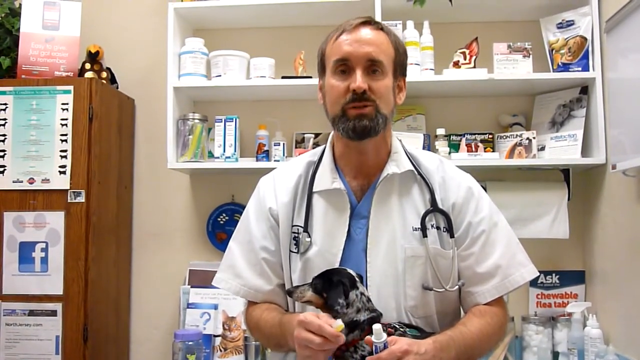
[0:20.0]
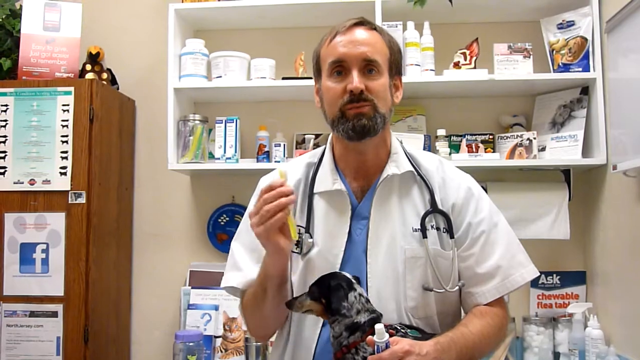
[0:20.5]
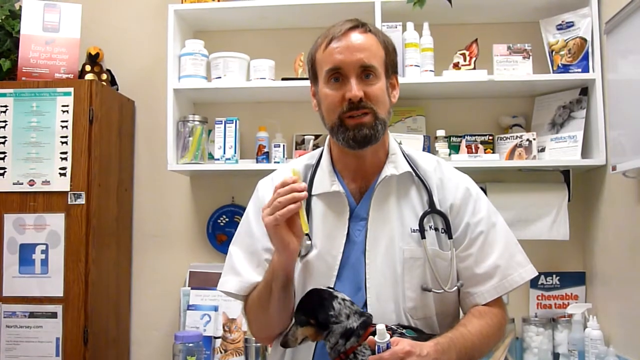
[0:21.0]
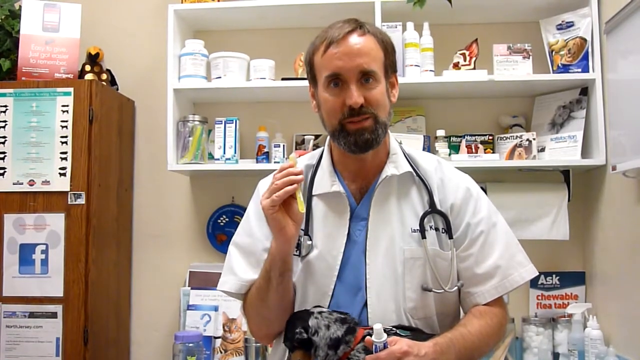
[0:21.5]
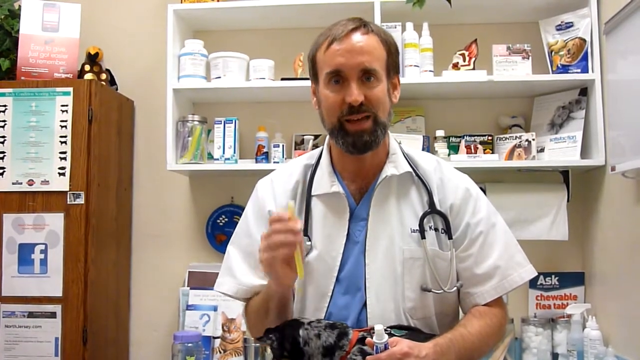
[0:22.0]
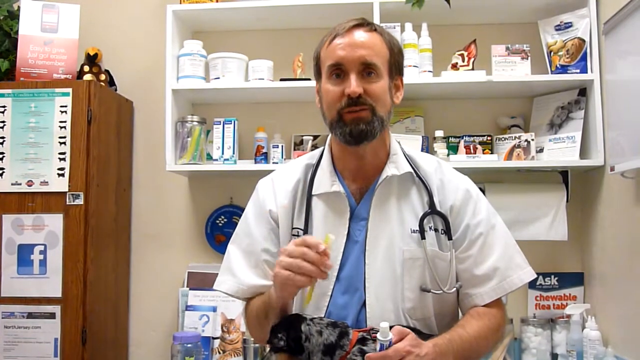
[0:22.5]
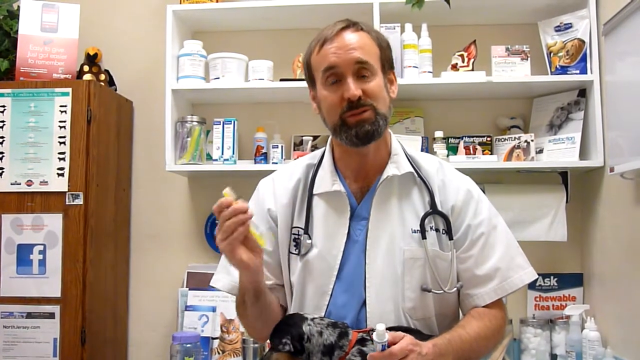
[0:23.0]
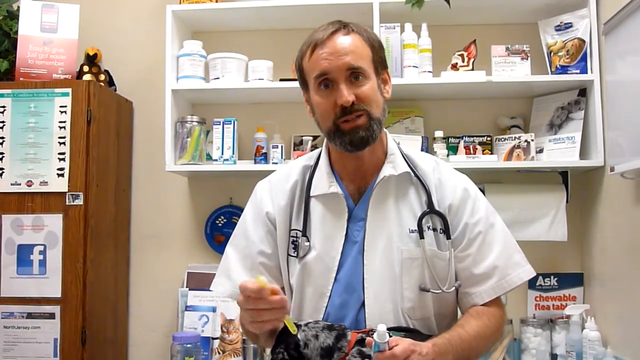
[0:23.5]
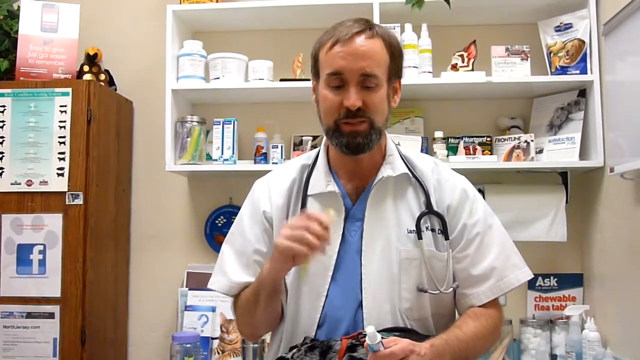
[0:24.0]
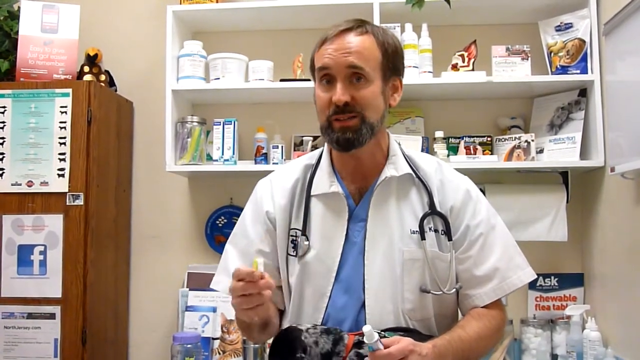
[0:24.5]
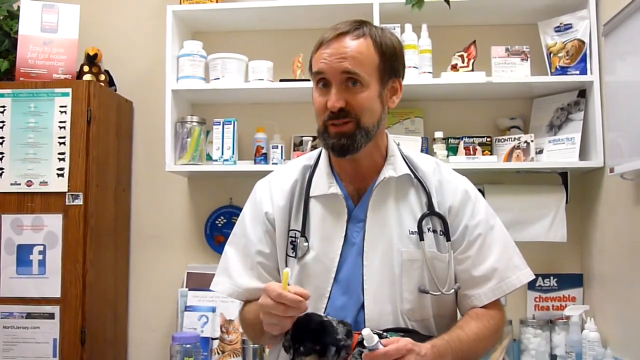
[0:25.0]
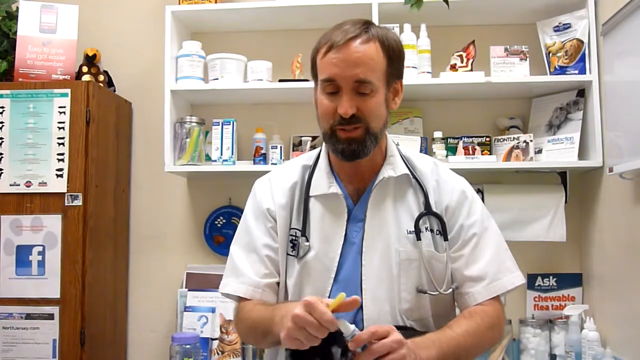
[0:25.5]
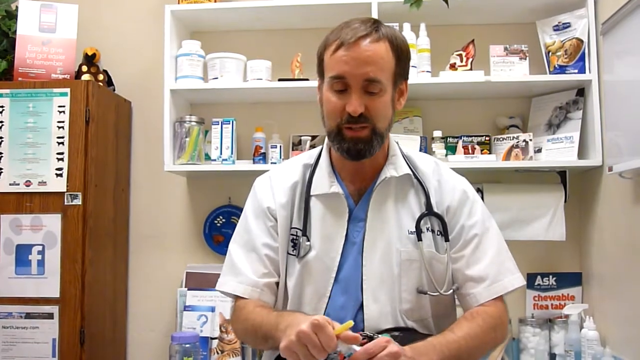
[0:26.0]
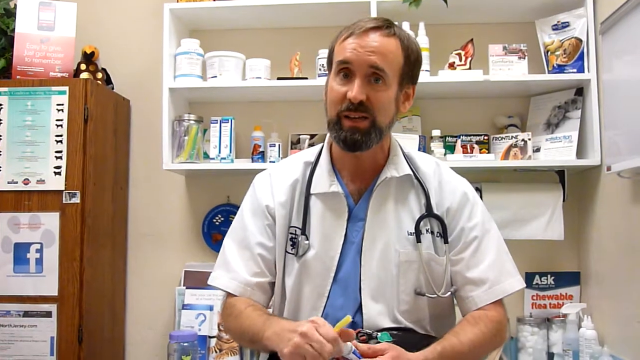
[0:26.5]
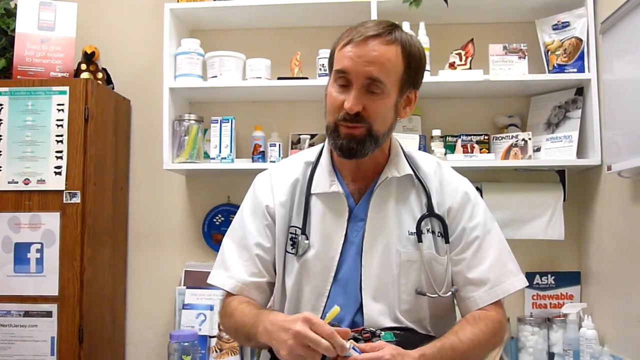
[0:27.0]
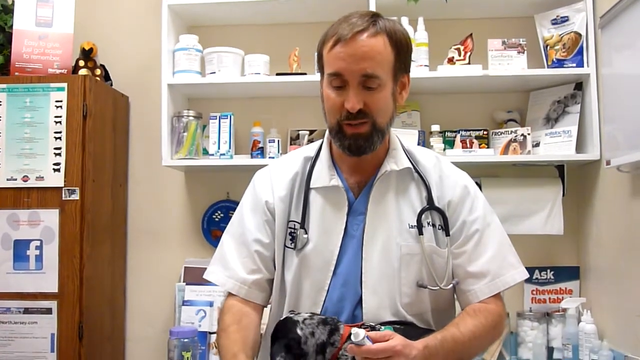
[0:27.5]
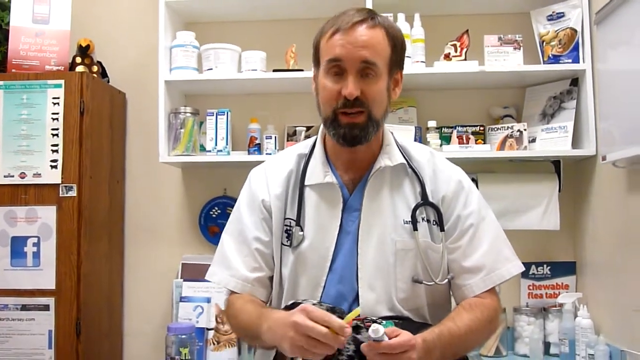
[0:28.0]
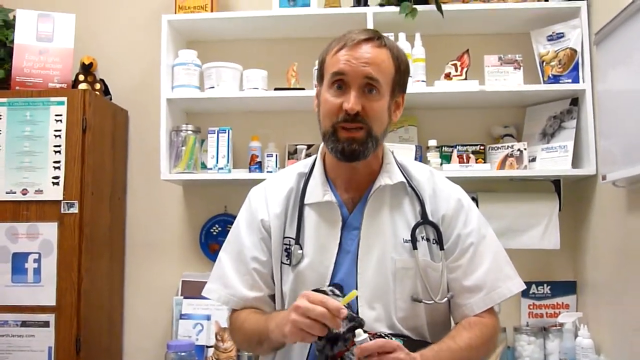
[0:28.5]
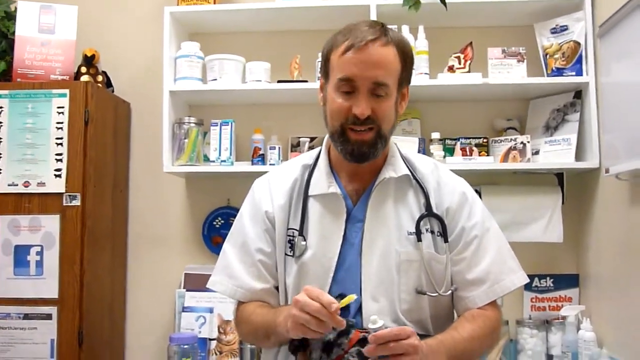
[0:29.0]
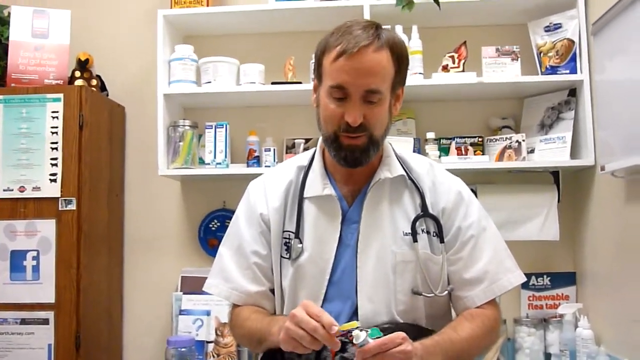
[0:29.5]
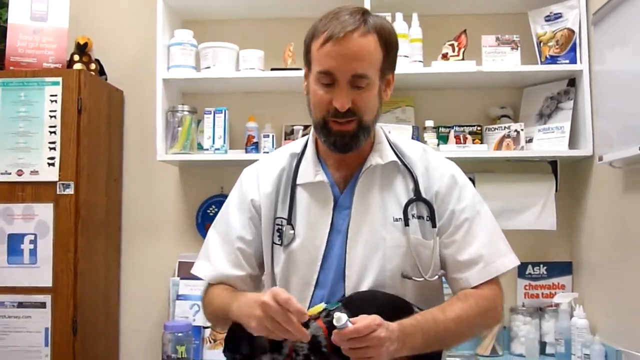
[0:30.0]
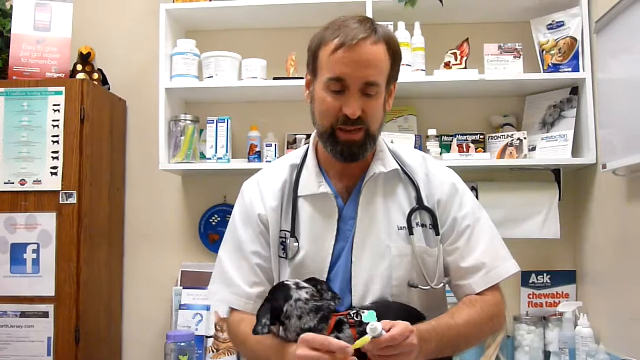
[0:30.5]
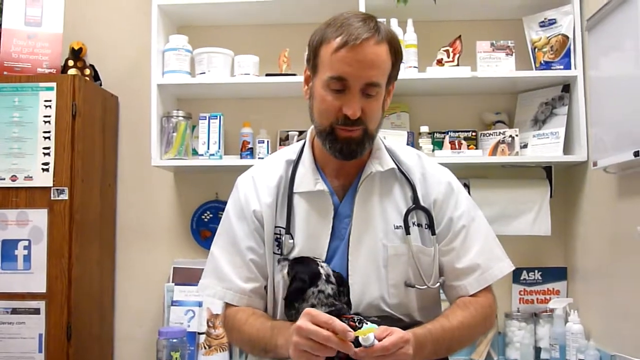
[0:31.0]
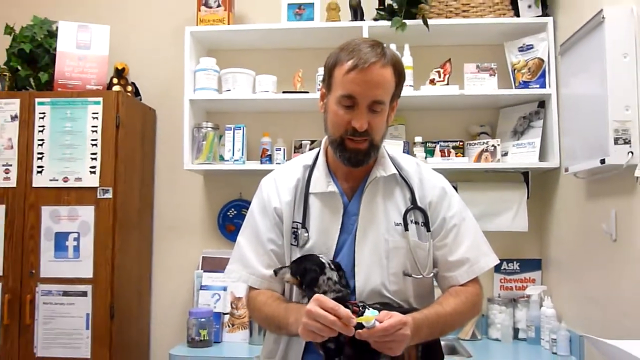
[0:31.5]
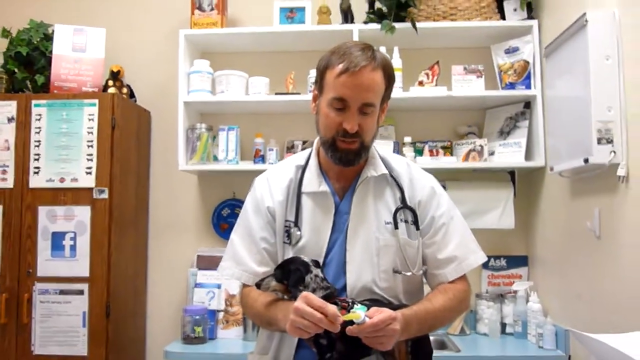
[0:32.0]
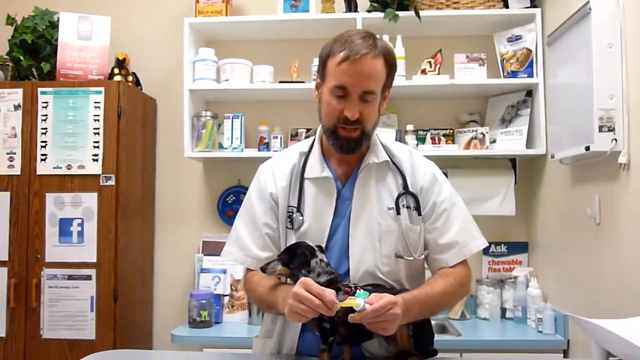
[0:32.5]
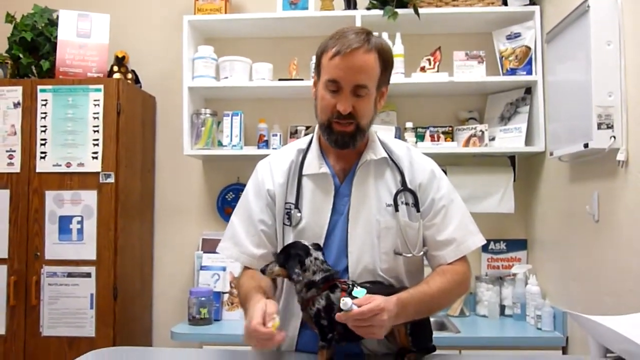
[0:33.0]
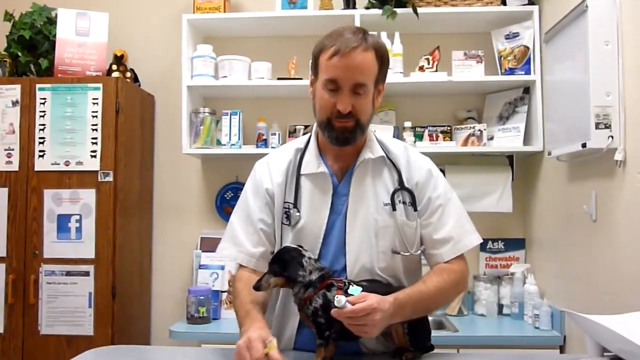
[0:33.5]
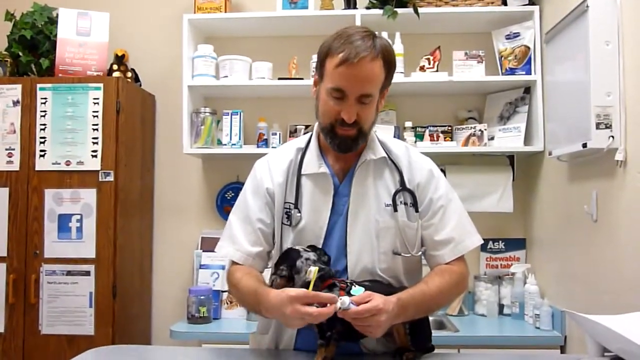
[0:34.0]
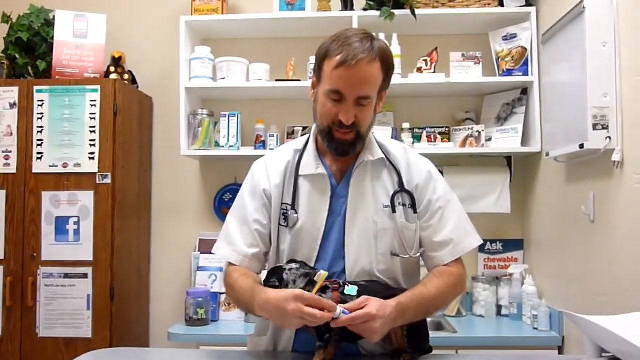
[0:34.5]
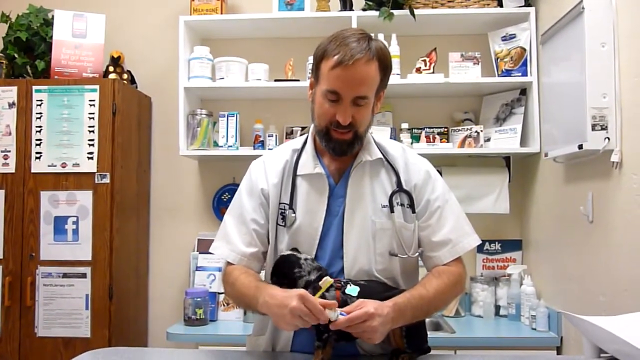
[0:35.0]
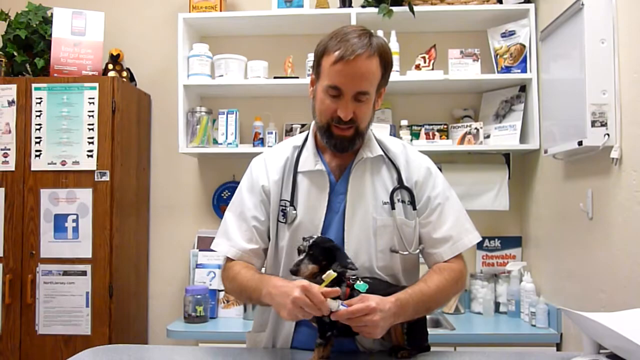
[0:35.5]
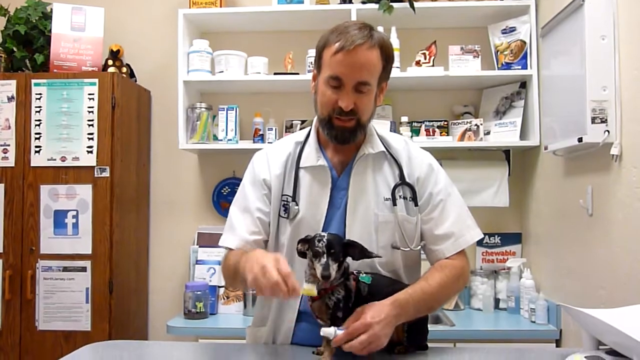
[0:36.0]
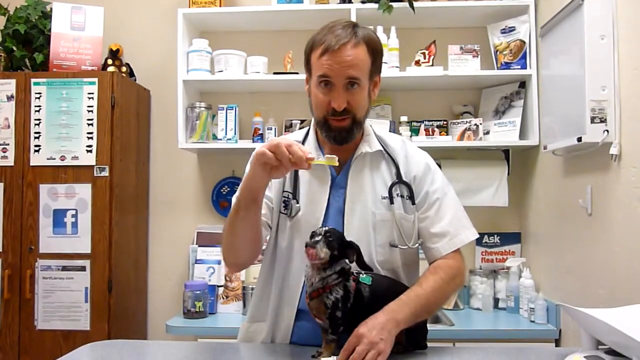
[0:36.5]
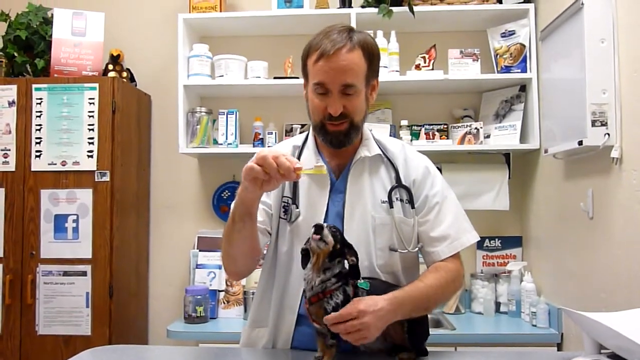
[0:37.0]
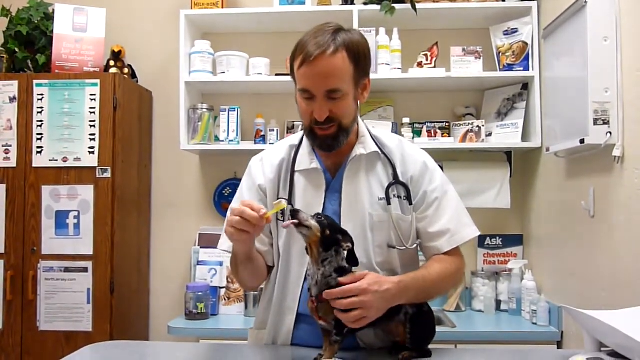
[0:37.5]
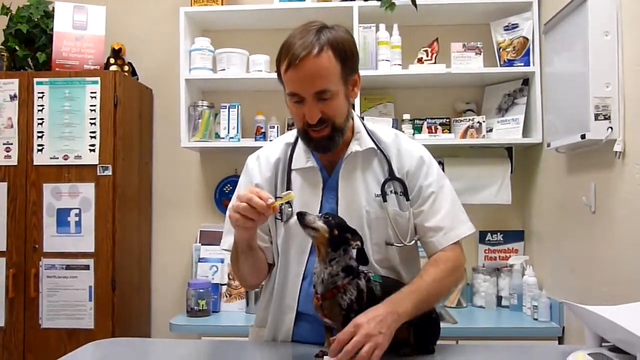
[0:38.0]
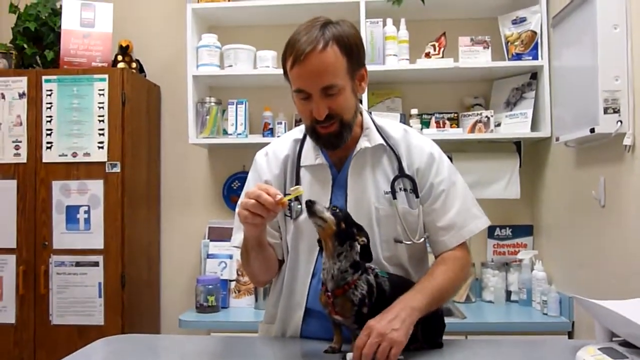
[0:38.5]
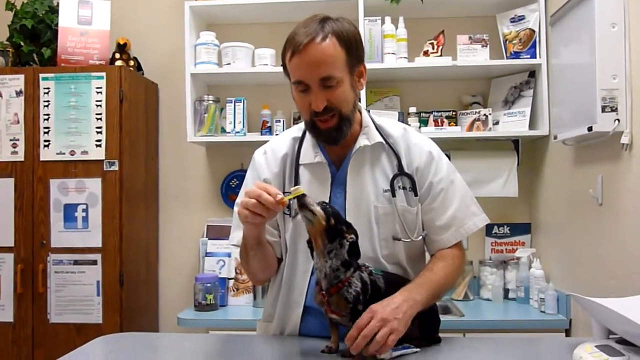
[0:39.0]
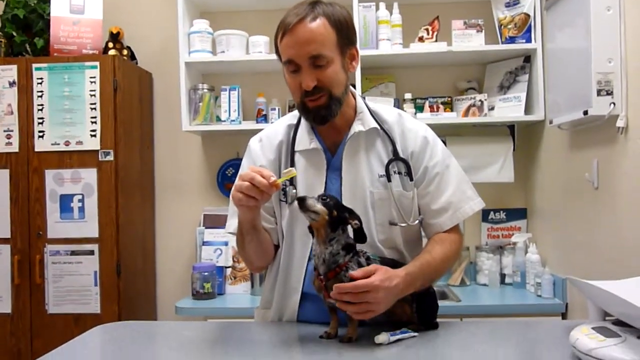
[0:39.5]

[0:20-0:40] The veterinarian places the dog on his veterinary table, holding another product in his right hand. The doctor's entire head and forehead are now in view. On the left side of the scene is a cabinet with a Facebook ad and a poster explaining some veterinary care. Holding the dog tightly, the vet squeezes some paste out of a tube onto a toothbrush. He might be brushing the dog's teeth, perhaps for oral care or to show how to brush a dog's teeth. The dog begins to lick the toothpaste, his tongue flapping up and down, and appears very happy.